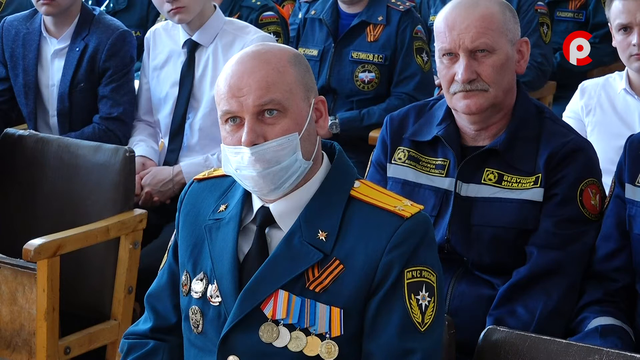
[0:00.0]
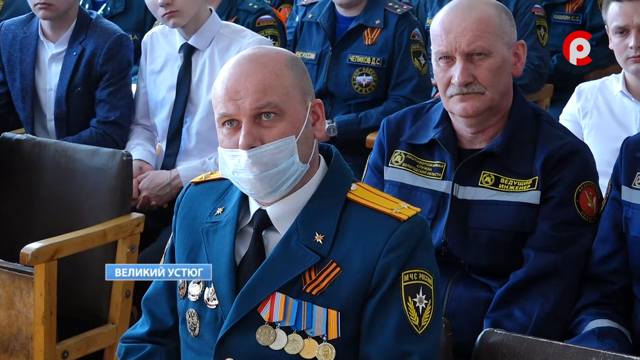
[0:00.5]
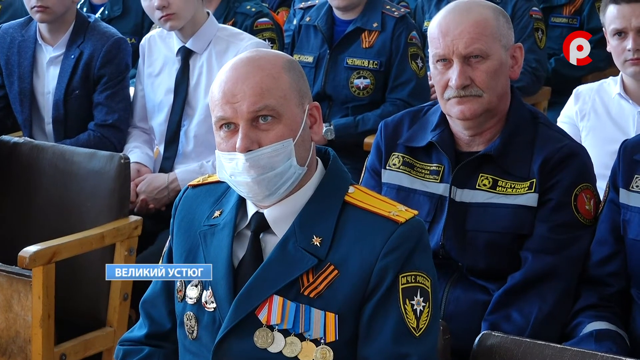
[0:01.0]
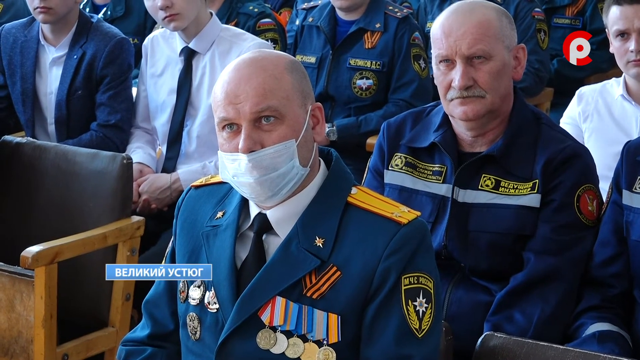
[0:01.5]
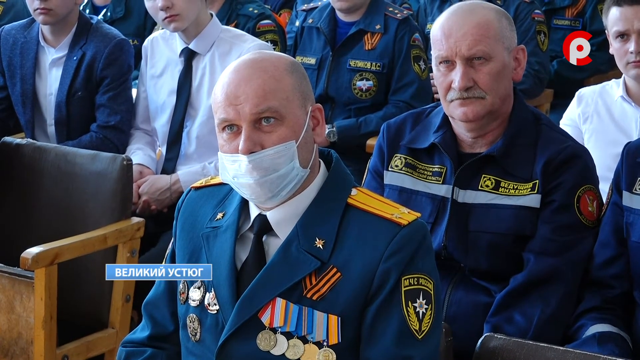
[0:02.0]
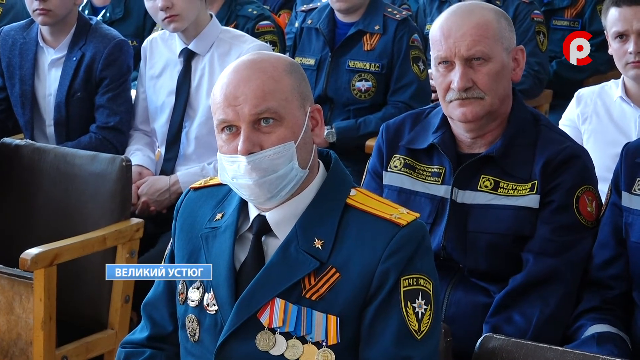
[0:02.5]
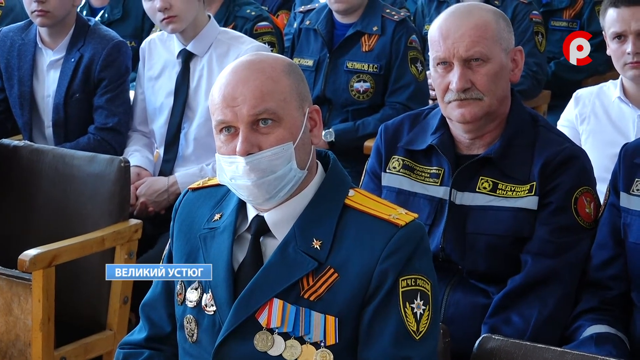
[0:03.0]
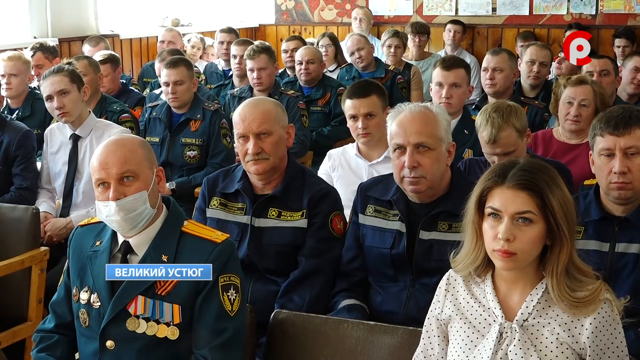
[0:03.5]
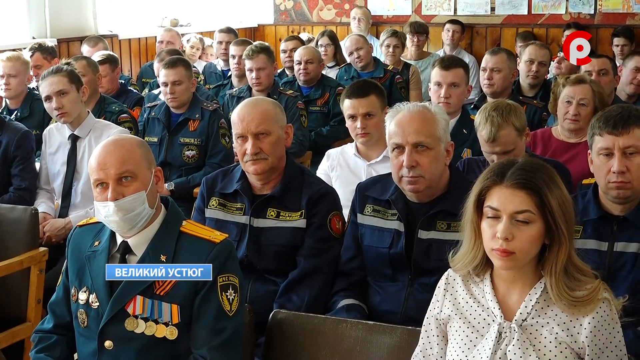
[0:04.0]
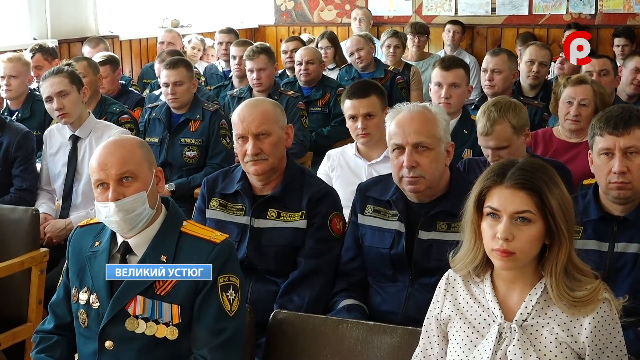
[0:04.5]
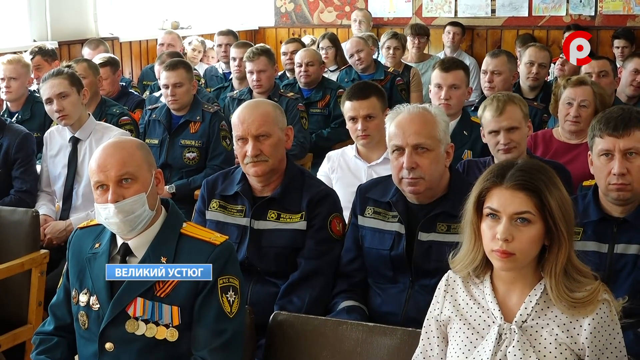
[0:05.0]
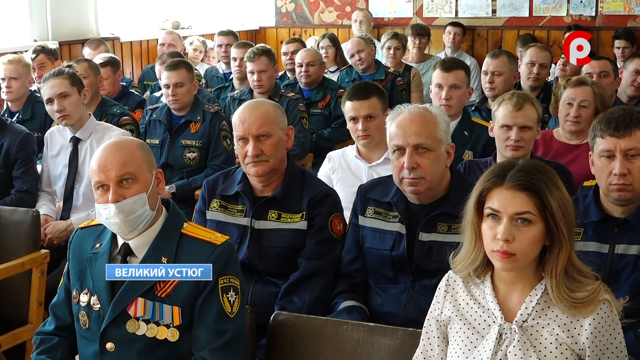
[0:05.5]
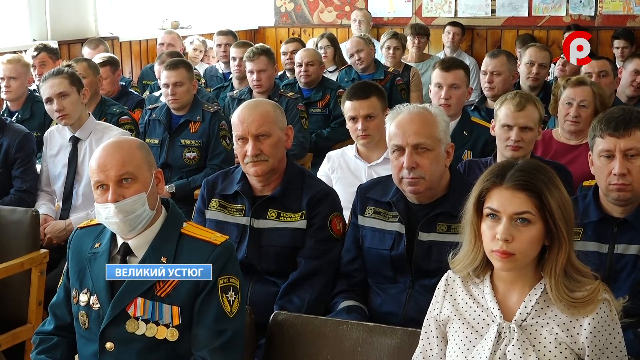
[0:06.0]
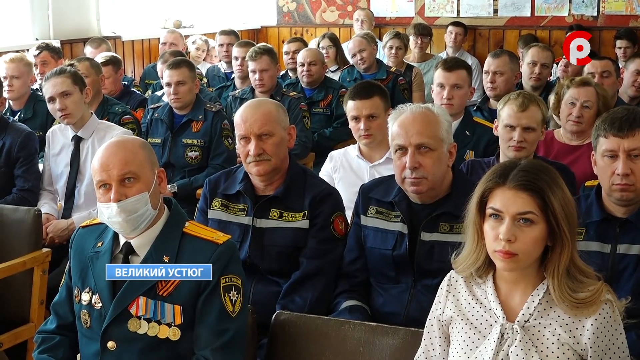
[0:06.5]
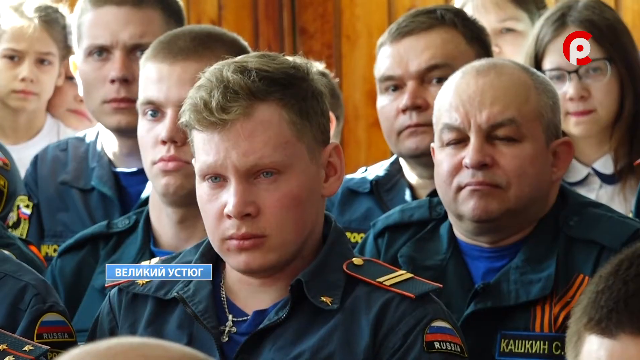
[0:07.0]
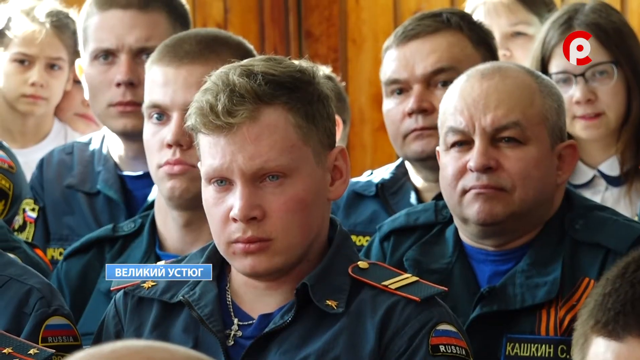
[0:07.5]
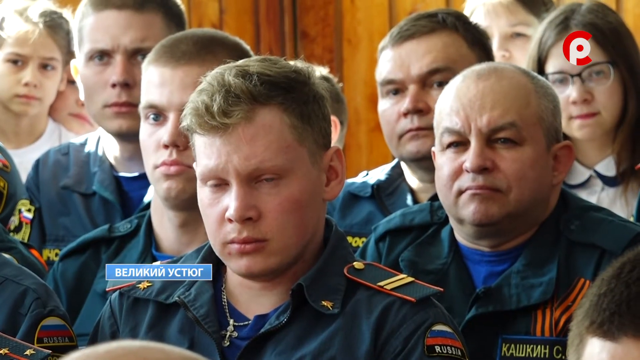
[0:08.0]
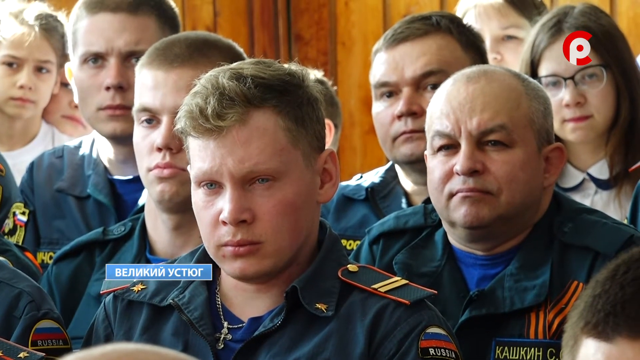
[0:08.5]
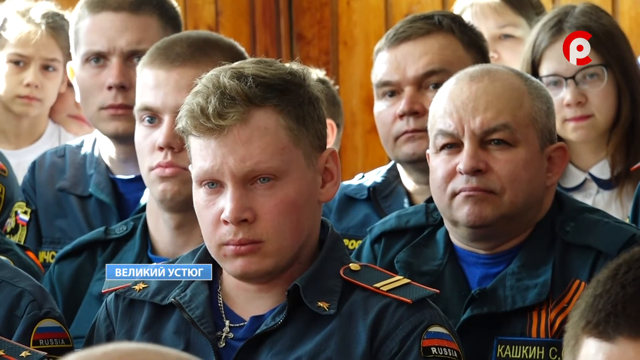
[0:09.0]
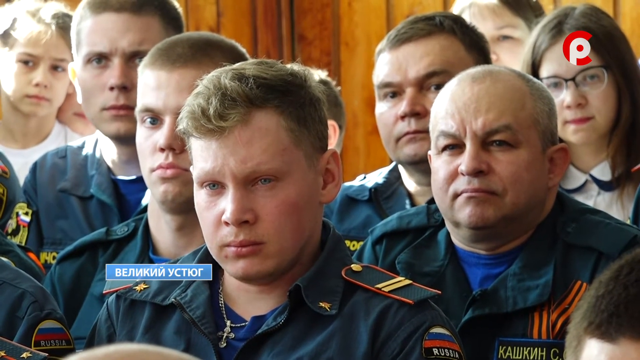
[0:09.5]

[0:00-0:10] The video opens on a crowd that includes a number of military personnel, possibly gathered for some kind of meeting, though there also appear to be families and civilians present, not just military. Some badges are visible but hard to make out; their lettering is not English. The setting appears to be possibly a classroom, with wooden panels on the walls. It is daytime, with light coming in. A couple of younger children and a couple of younger recruits are scattered through the crowd, and a couple of very young children are in the very back of the room, so there is a range of ages present.